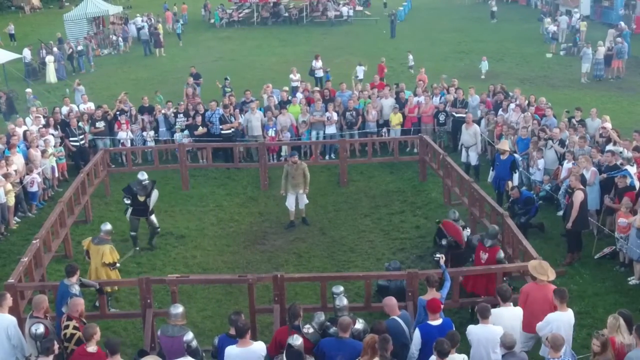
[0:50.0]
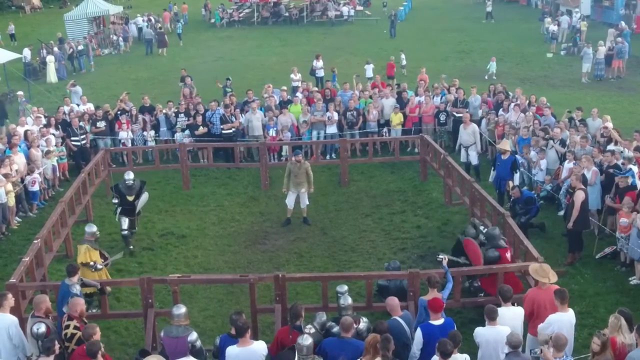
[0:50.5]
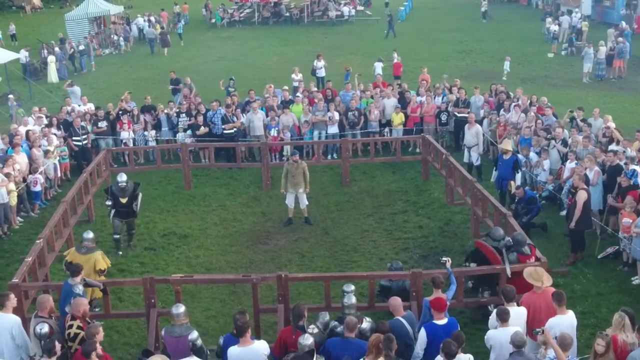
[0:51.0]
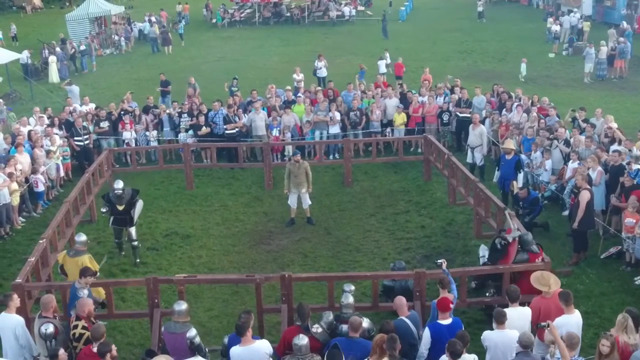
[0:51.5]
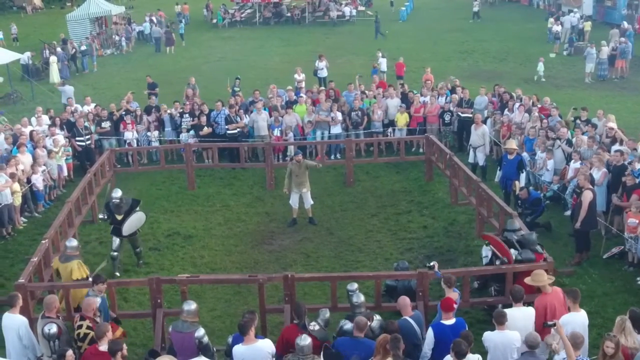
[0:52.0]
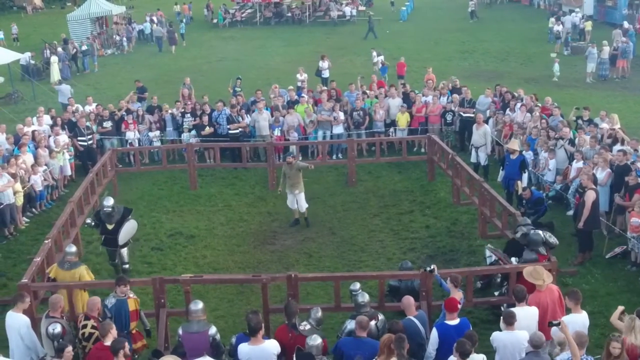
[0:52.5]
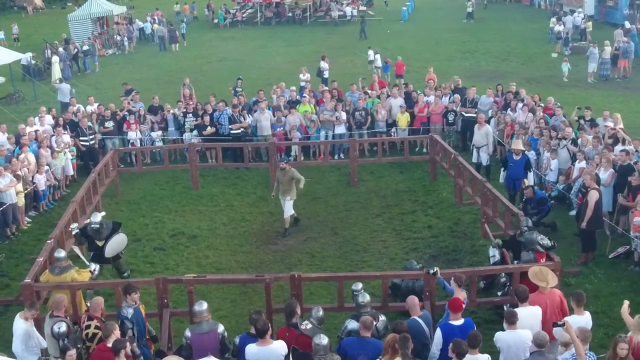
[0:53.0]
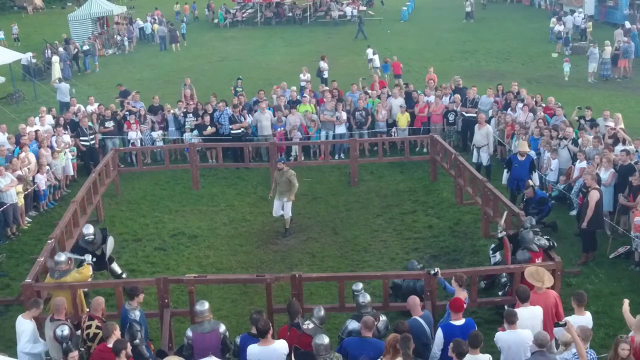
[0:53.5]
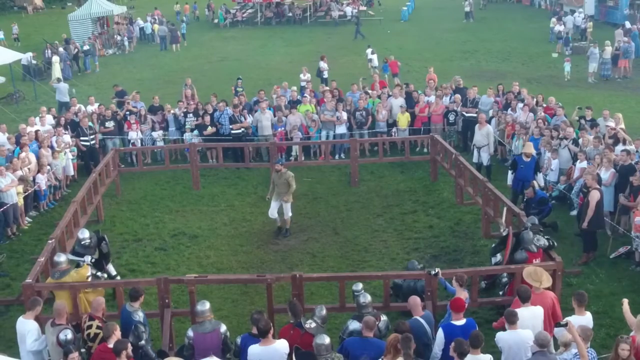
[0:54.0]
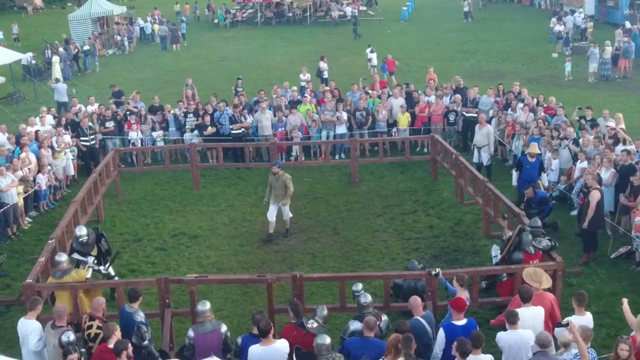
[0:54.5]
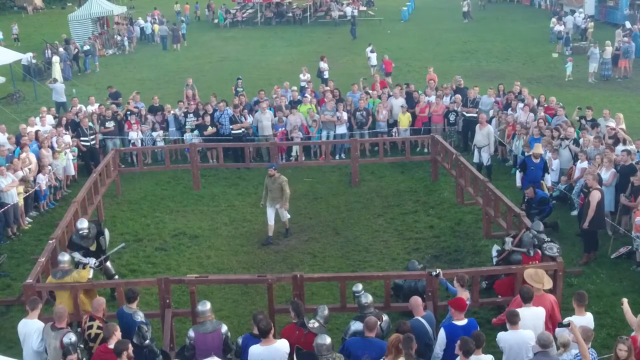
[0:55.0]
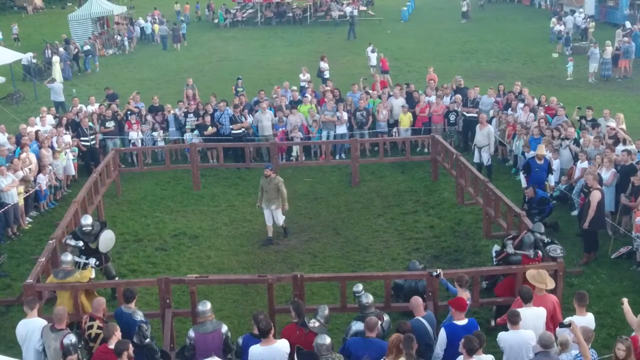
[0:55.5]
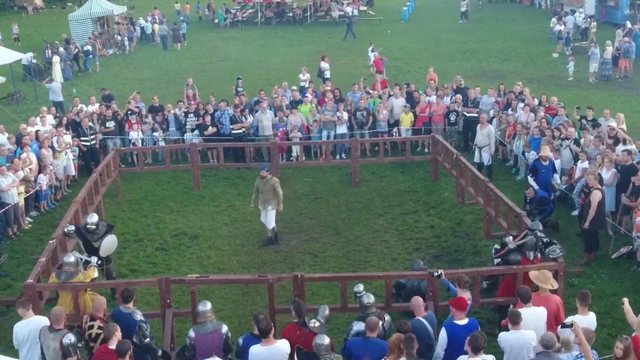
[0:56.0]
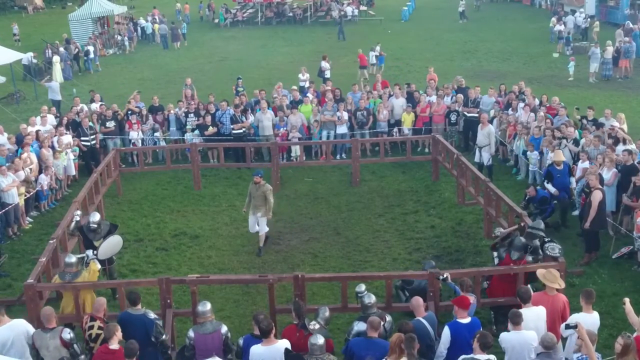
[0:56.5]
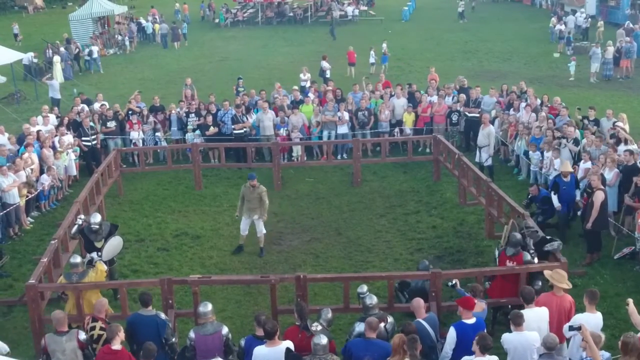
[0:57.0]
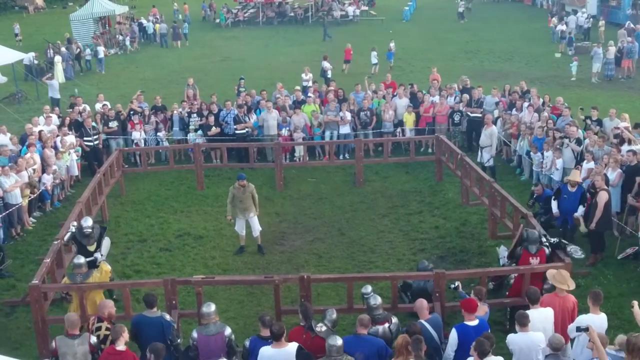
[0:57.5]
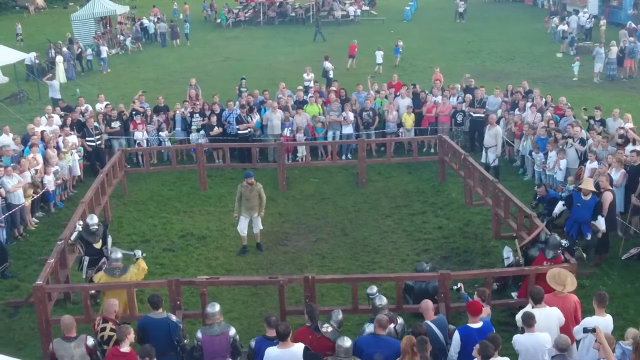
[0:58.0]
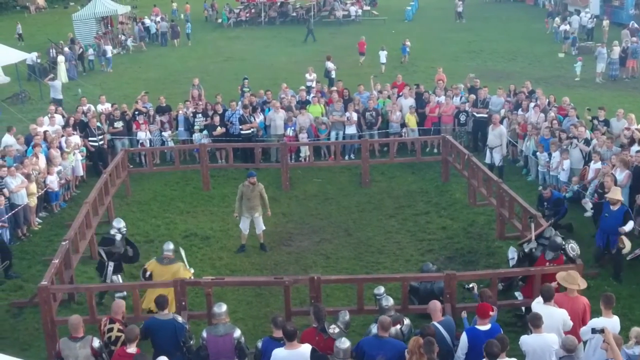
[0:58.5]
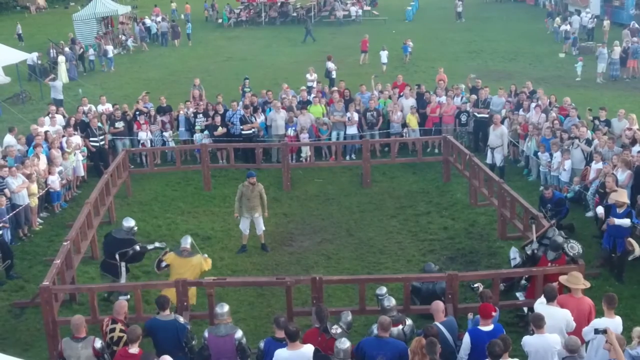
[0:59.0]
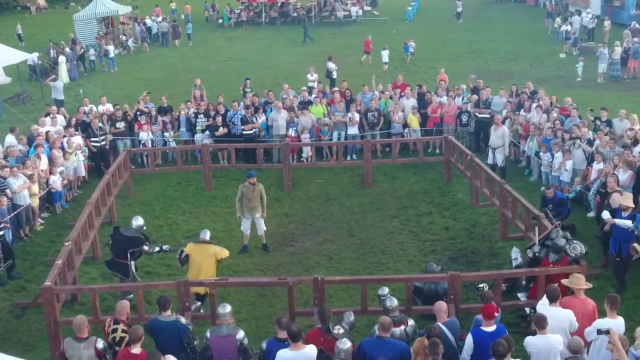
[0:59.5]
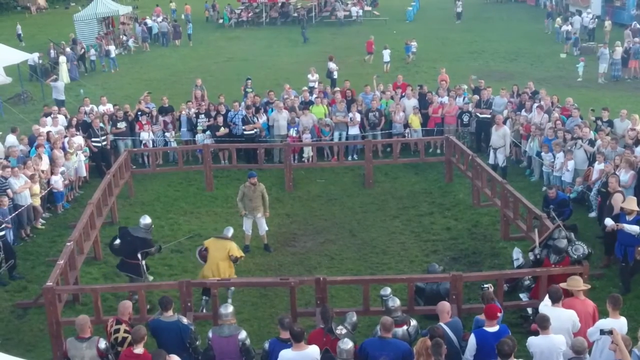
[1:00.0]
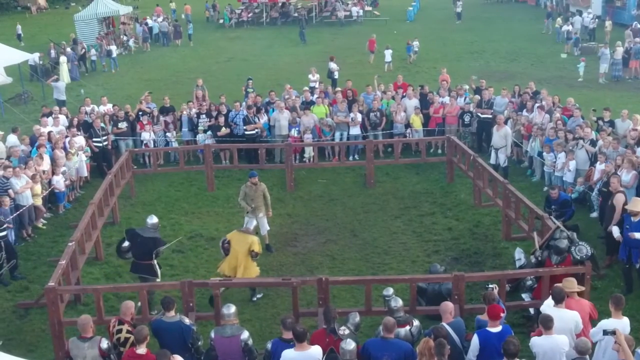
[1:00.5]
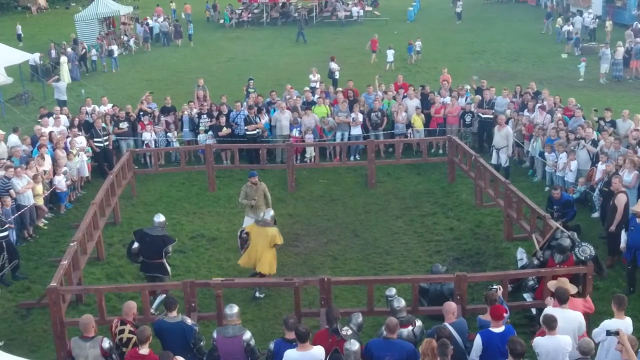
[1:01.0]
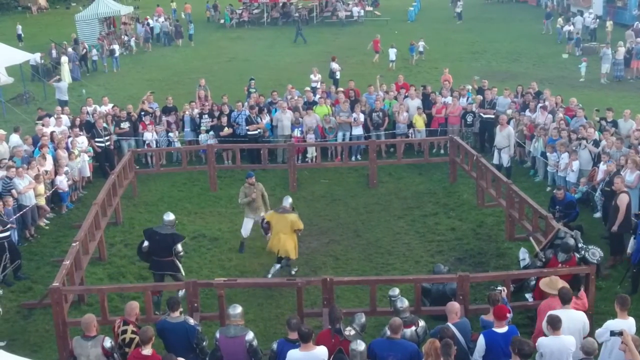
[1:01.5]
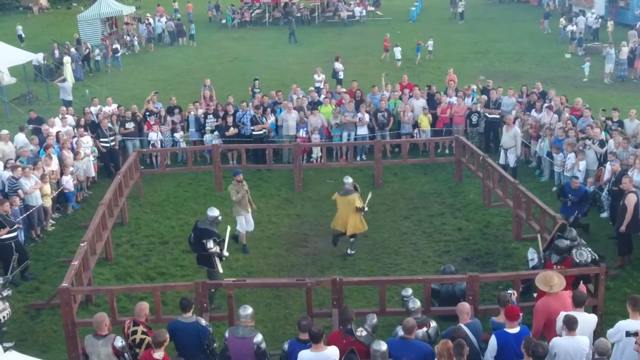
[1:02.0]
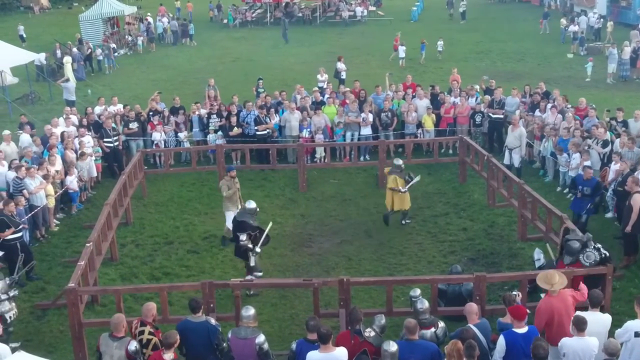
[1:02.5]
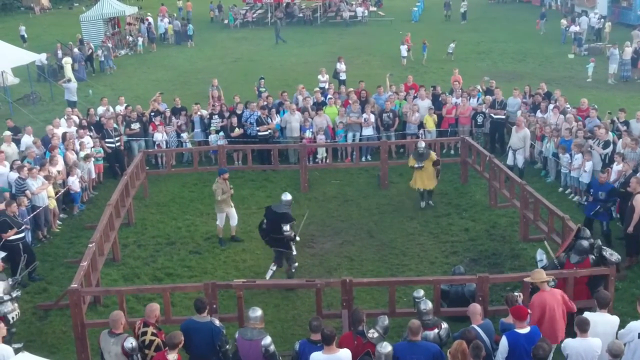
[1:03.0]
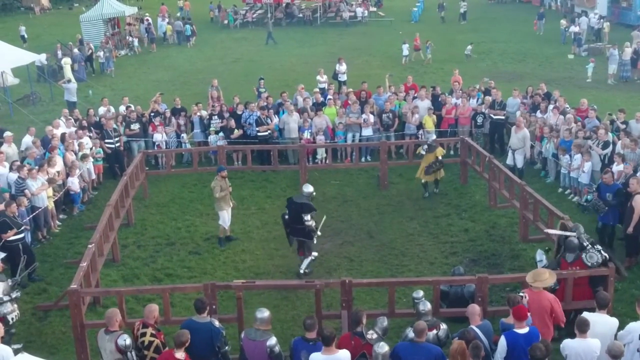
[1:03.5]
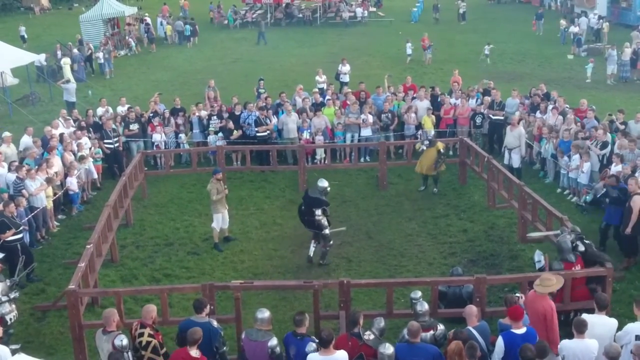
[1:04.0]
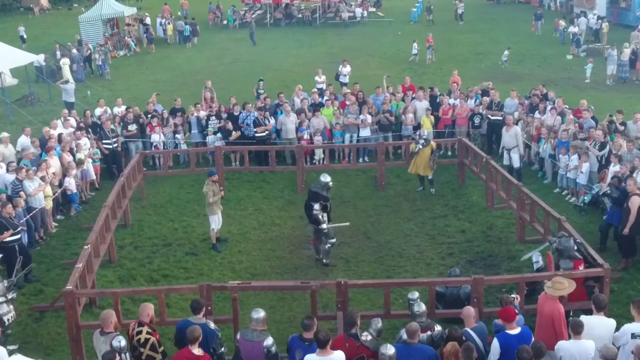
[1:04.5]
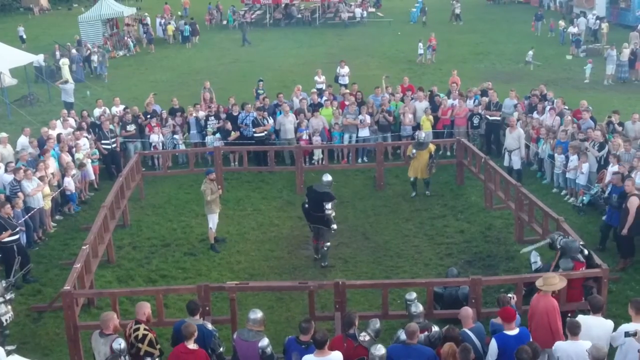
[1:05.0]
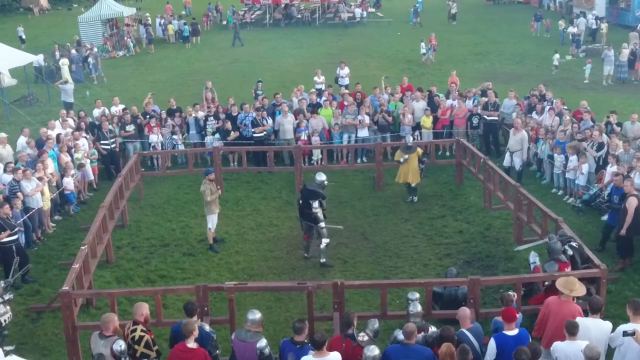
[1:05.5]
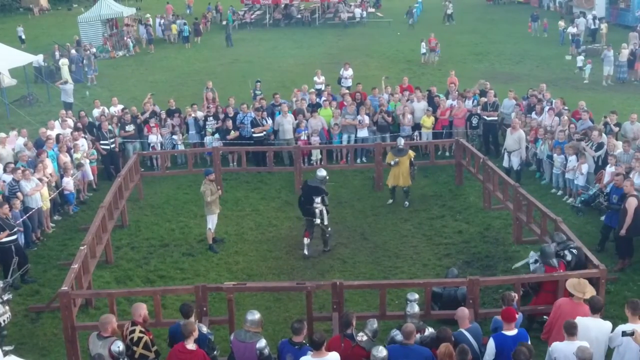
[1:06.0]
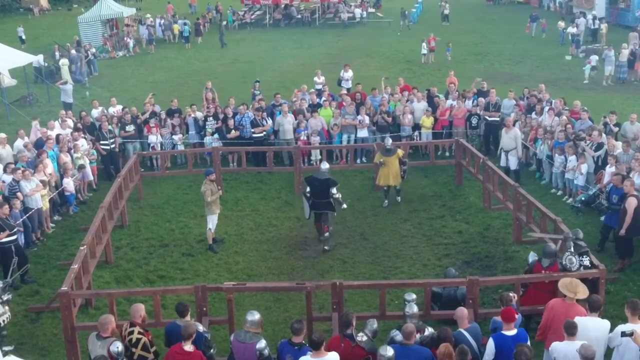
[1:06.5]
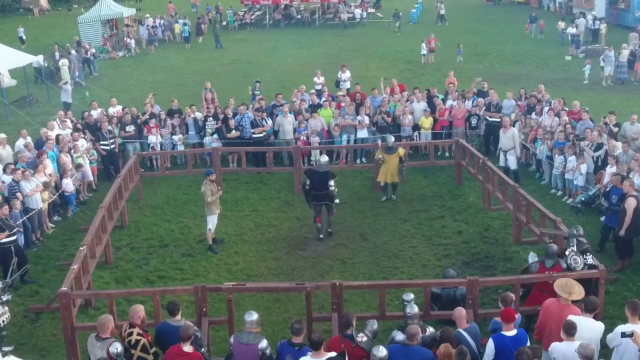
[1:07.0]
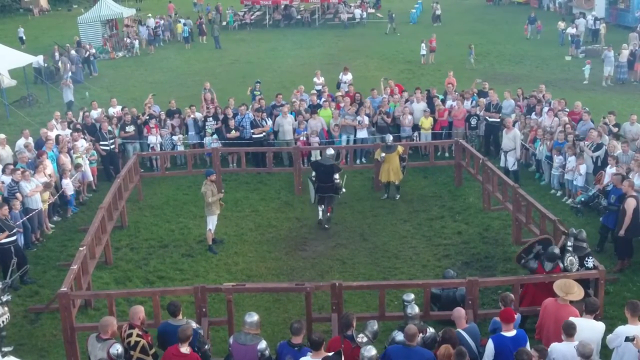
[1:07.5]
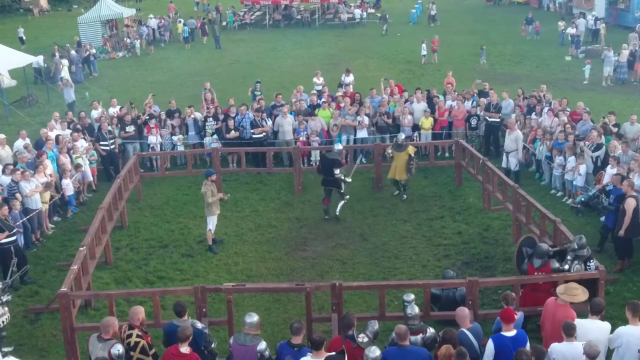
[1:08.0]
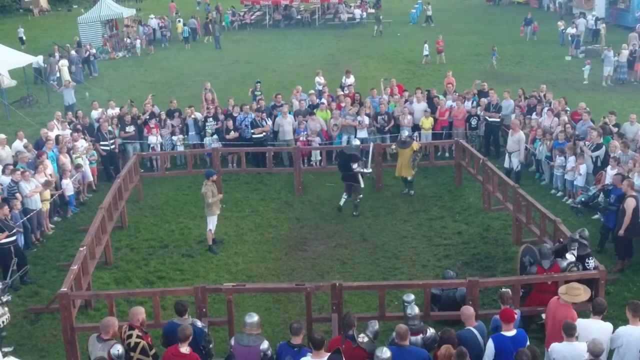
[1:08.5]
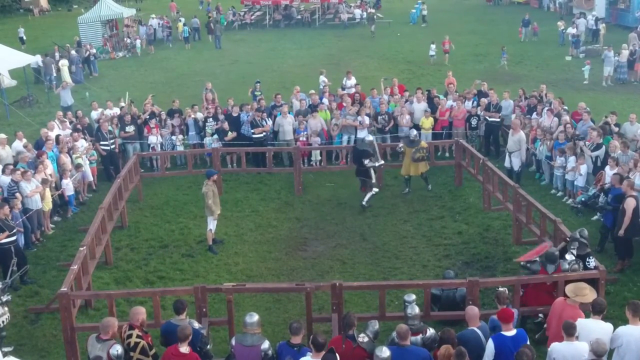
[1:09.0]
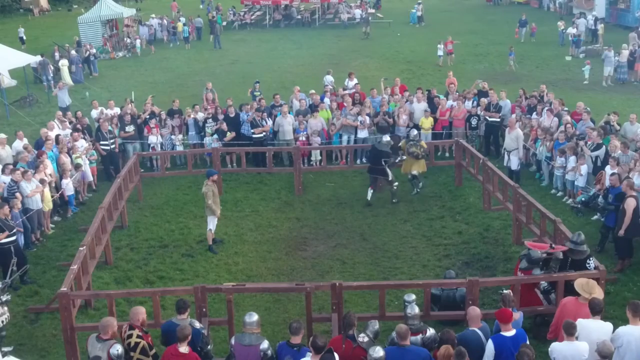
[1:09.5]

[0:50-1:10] The fighter standing above the one in the red tabard steps forward and attacks him. This fighter wears a black shirt and appears to wear a dark steel helm. They both begin grappling, and the one in black pushes the one in red up against the corner. The other two knights standing on the left then both begin cautiously engaging as well. The one at the bottom, who wears a yellow shirt over his armor, backs himself into the corner. The one above him wears a black shirt and appears to wield a mace. He attacks forward, and the person in the yellow shirt raises his sword to block. The people in the bottom right continue to grapple. The one in the yellow shirt breaks out of the corner, rushes past the one in the black or dark blue shirt, and rushes over to the opposite corner. The one in the blue shirt stands confidently in the center. They cautiously begin approaching each other again.